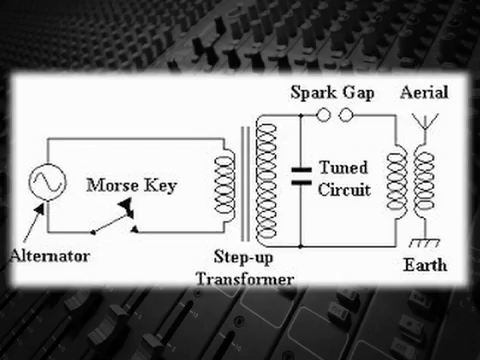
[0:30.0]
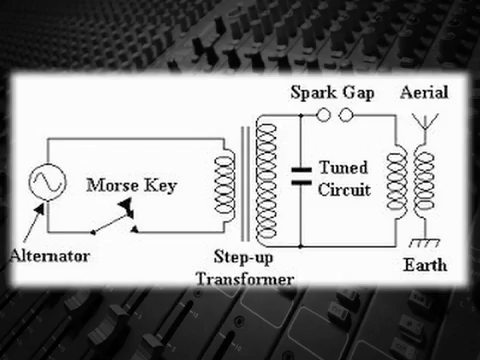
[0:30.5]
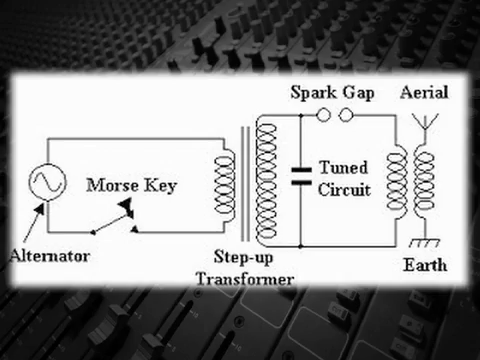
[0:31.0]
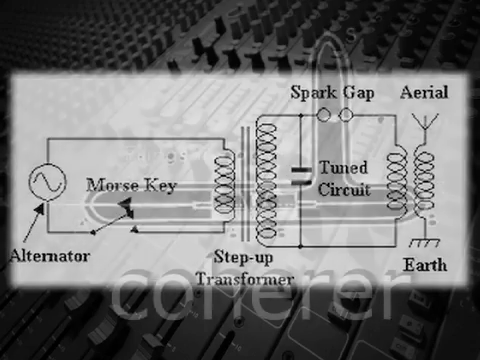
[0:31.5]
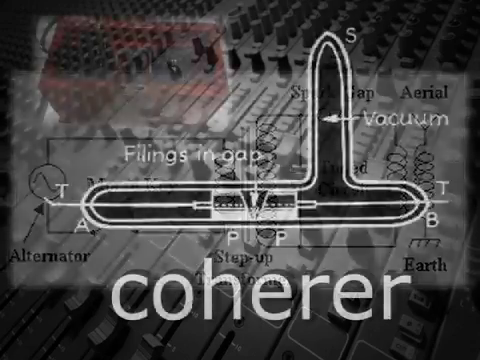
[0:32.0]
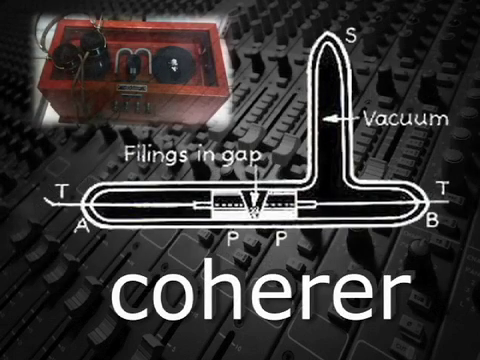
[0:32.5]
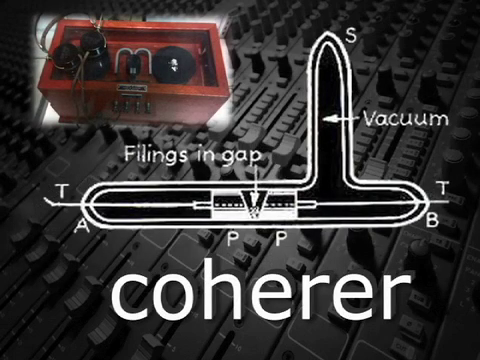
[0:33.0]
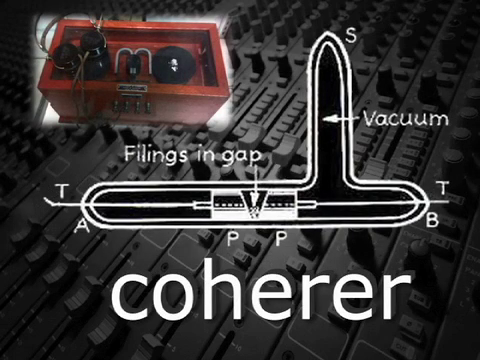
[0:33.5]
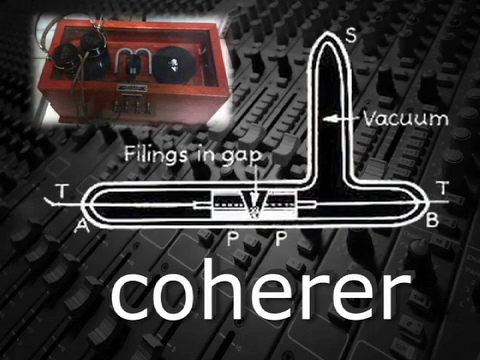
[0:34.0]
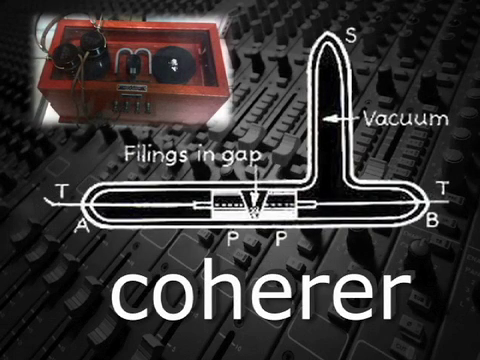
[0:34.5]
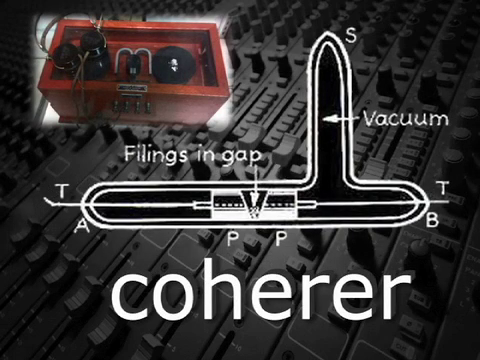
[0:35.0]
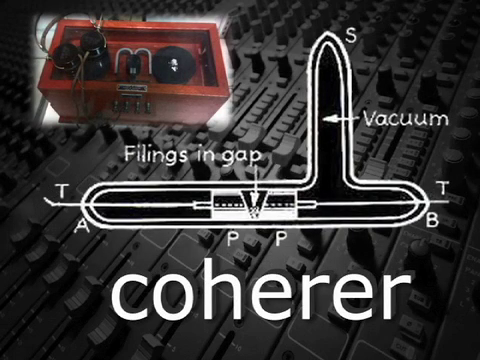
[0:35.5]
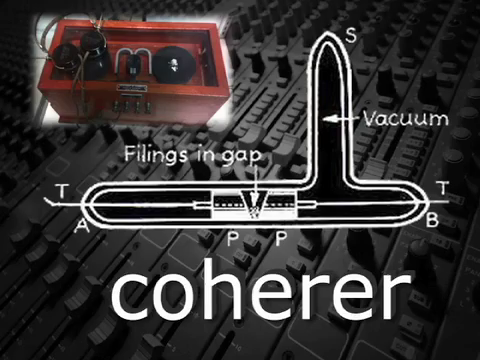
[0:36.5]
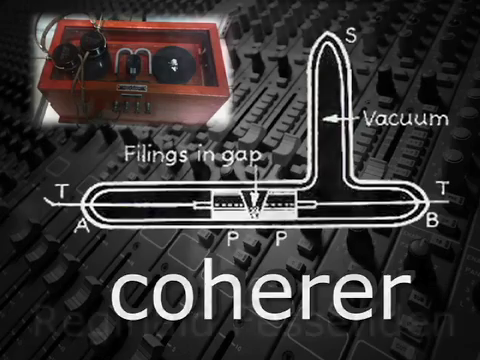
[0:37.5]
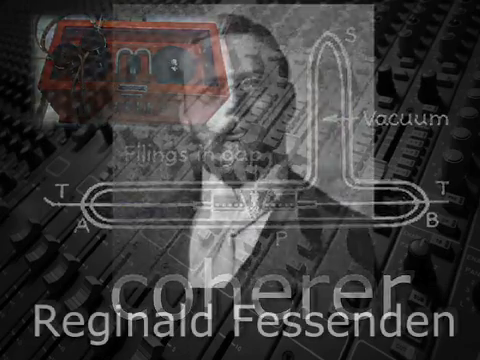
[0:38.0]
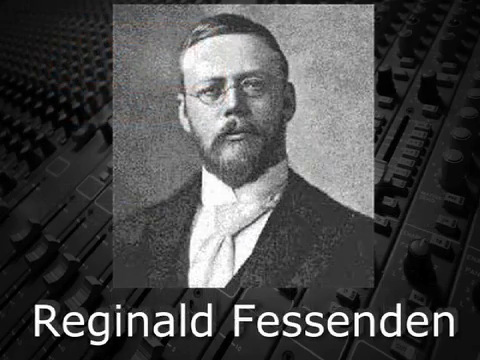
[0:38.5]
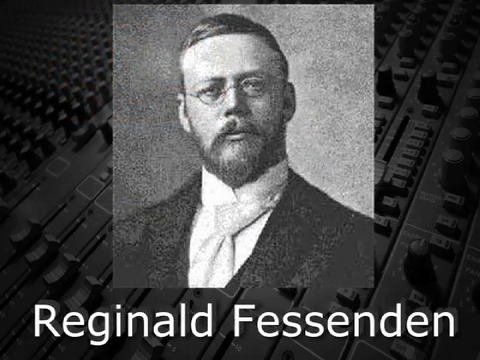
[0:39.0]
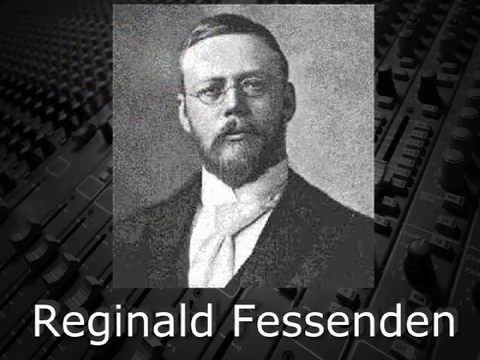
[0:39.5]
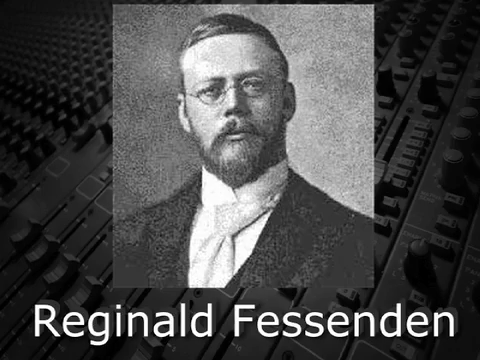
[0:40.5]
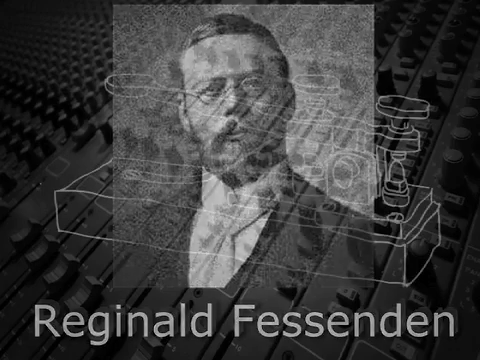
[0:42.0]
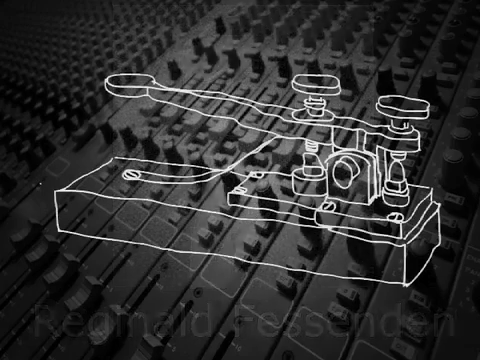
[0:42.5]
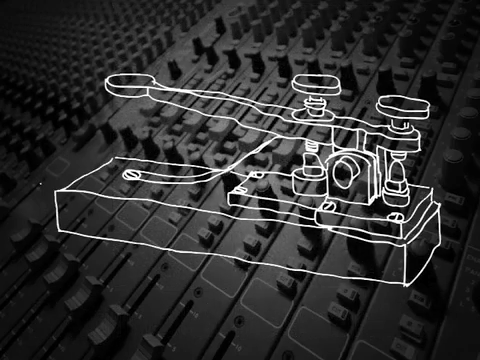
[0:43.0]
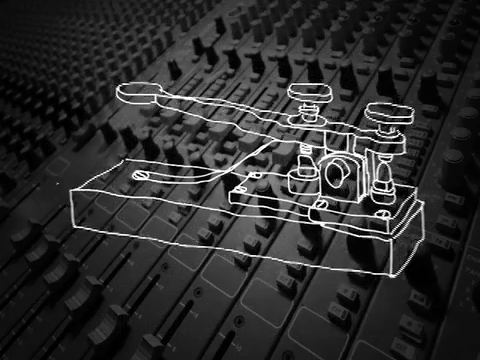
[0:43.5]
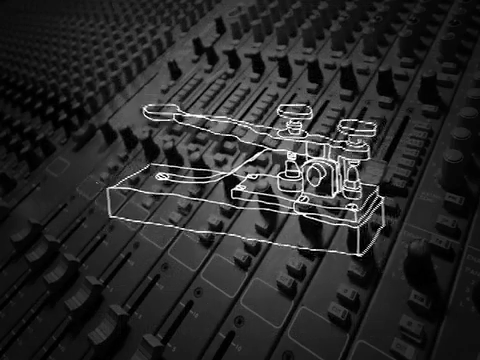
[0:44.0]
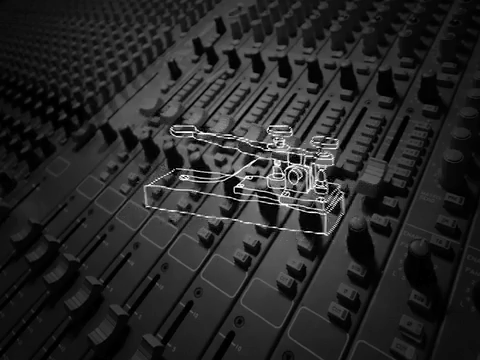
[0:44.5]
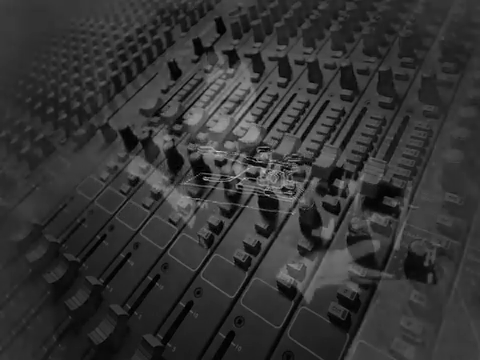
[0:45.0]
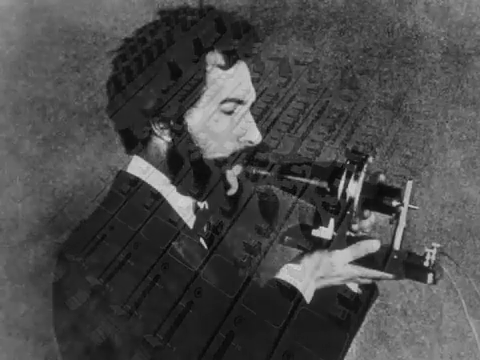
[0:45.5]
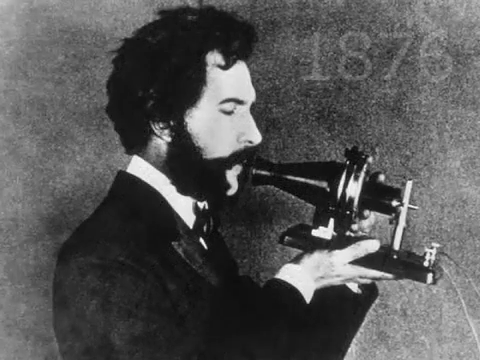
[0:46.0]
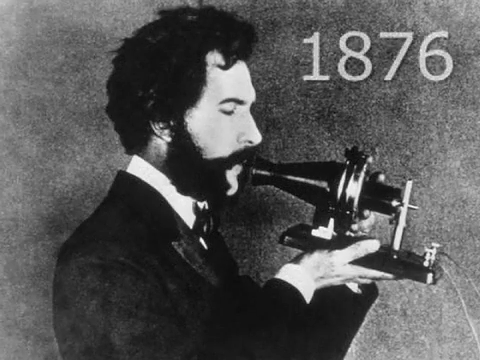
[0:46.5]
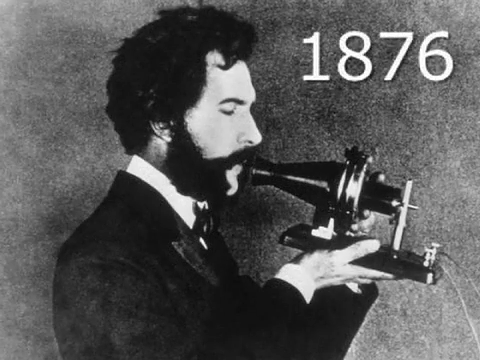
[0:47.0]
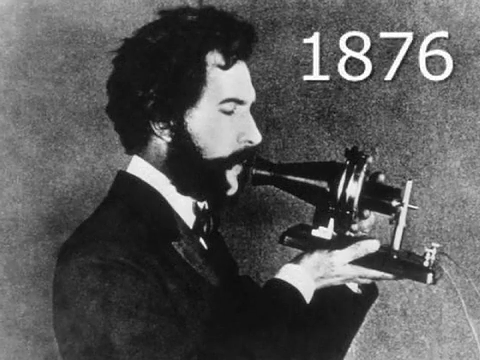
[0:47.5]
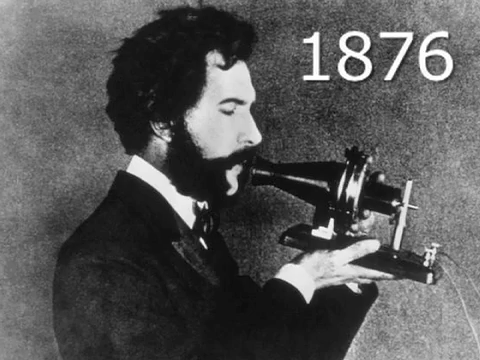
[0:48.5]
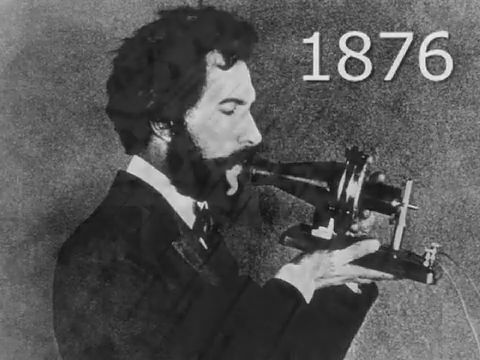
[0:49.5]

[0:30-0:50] The video moves on from the graph to an illustration showing apparent steps of the invention. Labels appear on it, for example "filling in the gap," pointing inside a single cylinder-like tube. The tube runs the long way and then up and down, and in the up-and-down portion an arrow in the middle is labeled "vacuum." Letters label the cylinder: T on the left-hand and right-hand sides, A on the left and B on the right. The top of the cylinder is labeled S, and toward the middle, where it lies lengthwise, are the labels P and E. In the upper left-hand corner is an image of something like a red container with an object inside, apparently related to the invention. A man in a black-and-white portrait slowly transitions in. The earlier doodle then pops up, along with a transition to a black-and-white portrait of a man in 1876 holding an object in his hands. He faces away from the camera toward the right-hand side and looks intently at the object.